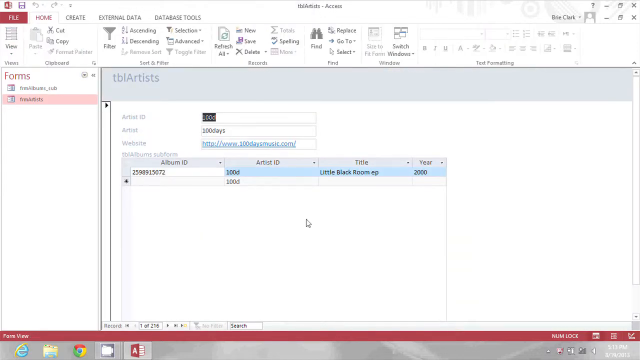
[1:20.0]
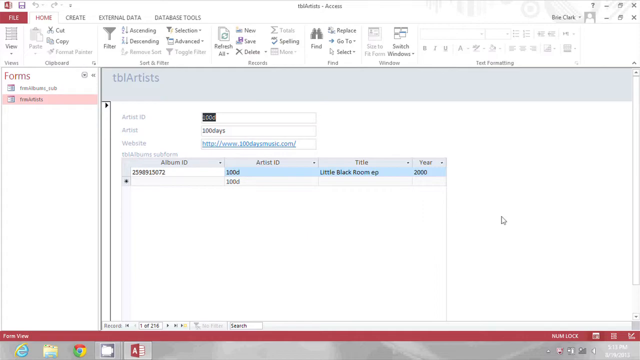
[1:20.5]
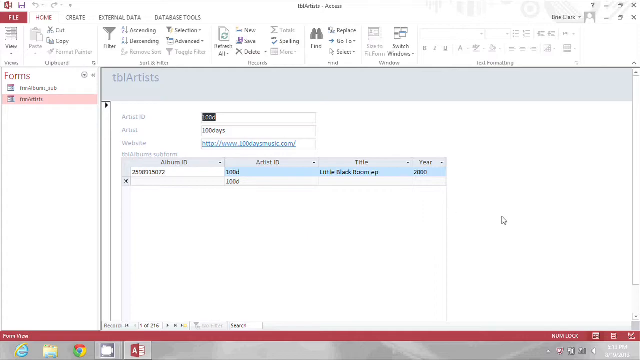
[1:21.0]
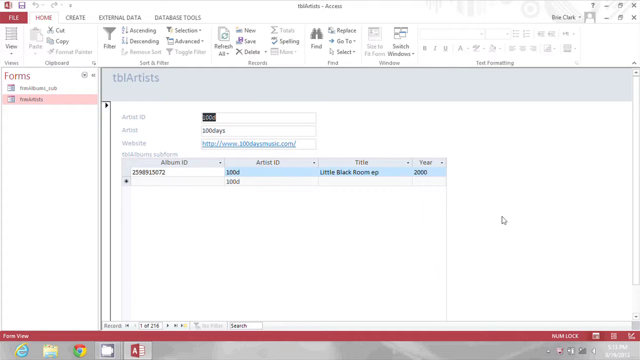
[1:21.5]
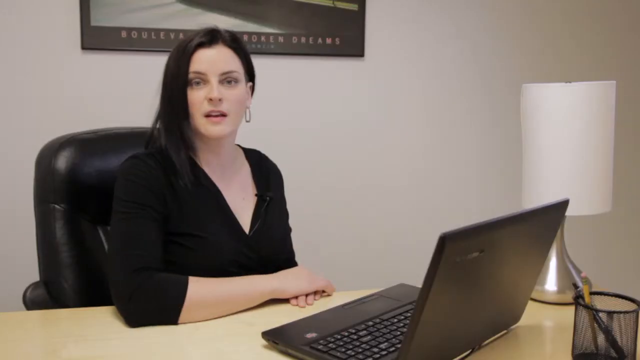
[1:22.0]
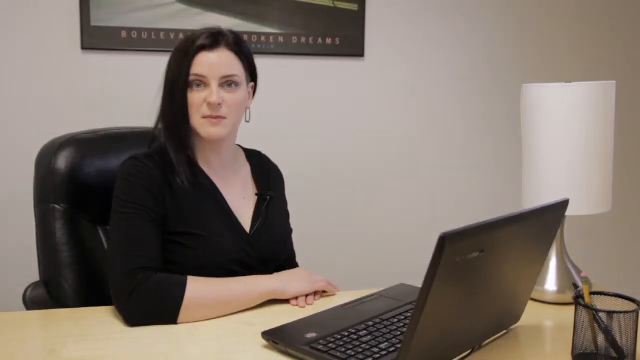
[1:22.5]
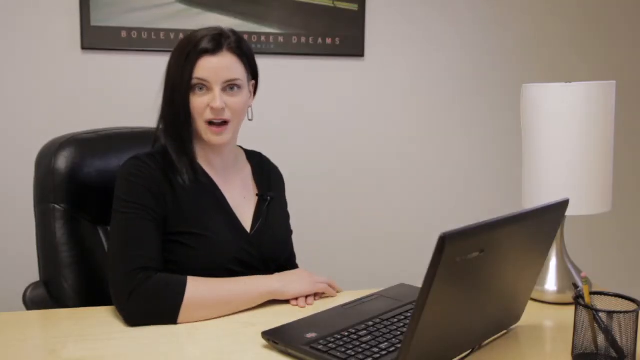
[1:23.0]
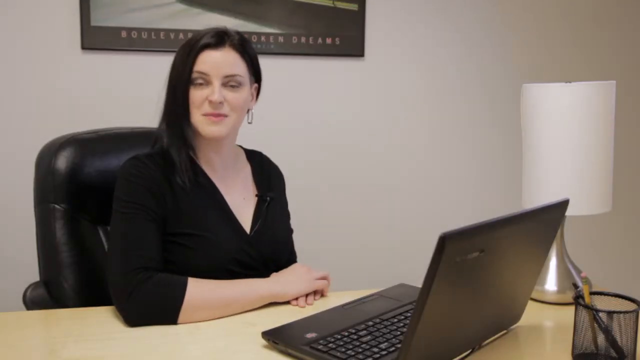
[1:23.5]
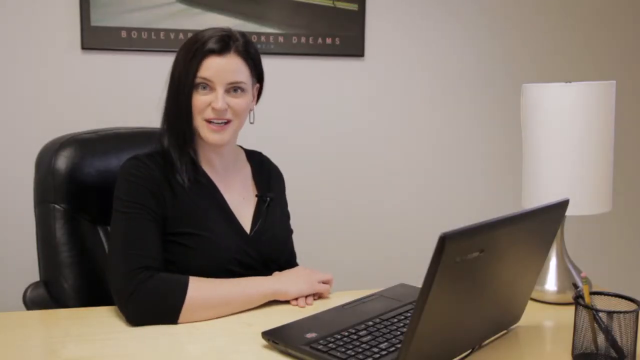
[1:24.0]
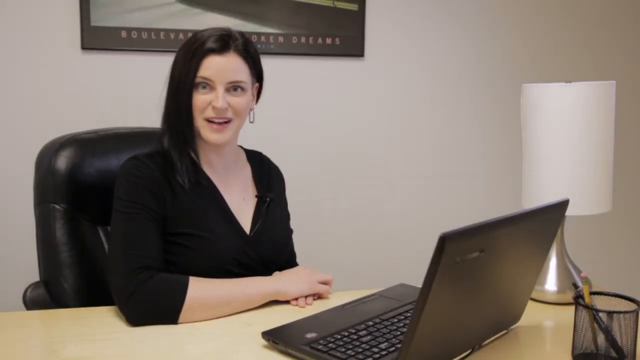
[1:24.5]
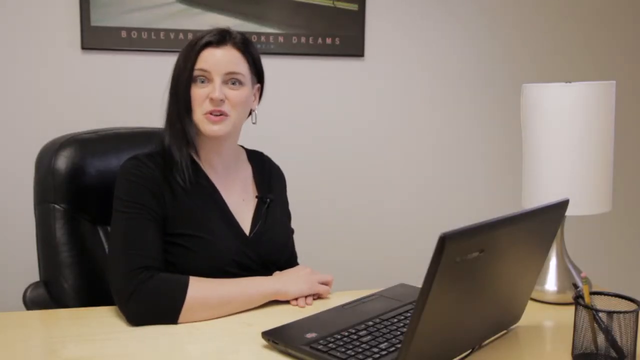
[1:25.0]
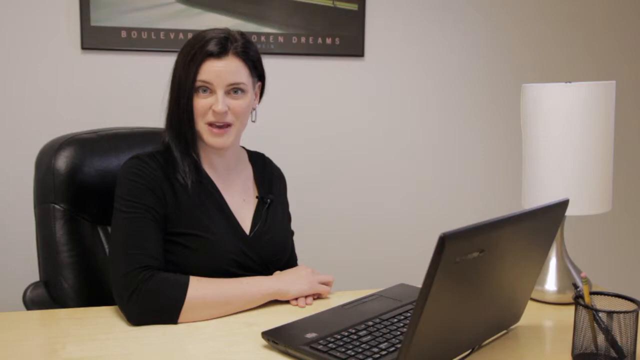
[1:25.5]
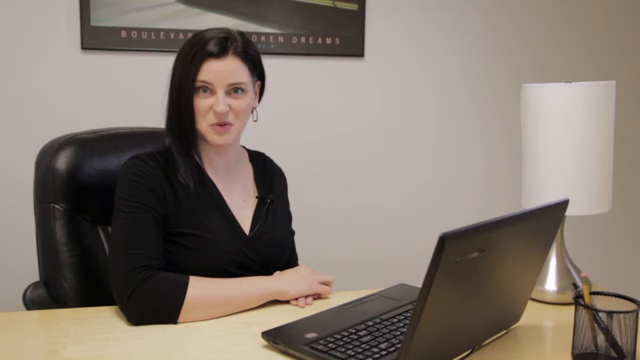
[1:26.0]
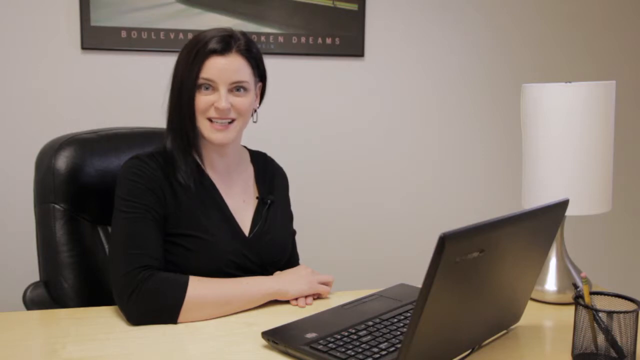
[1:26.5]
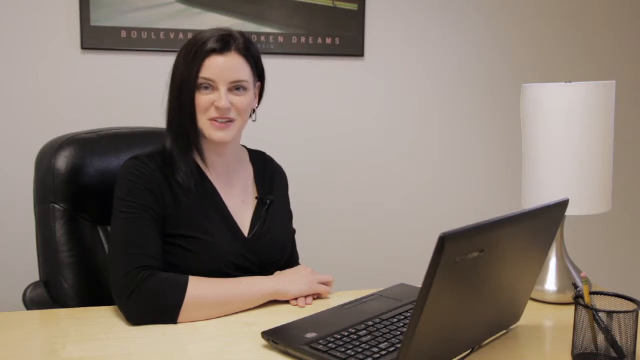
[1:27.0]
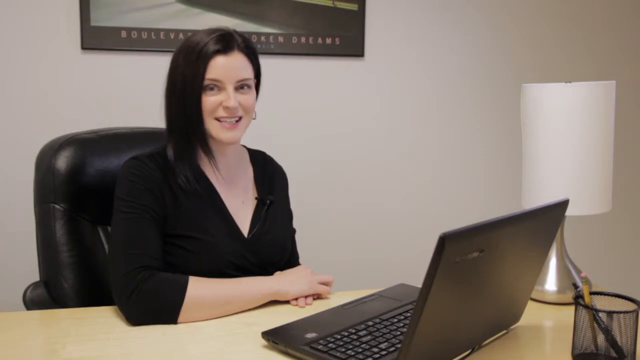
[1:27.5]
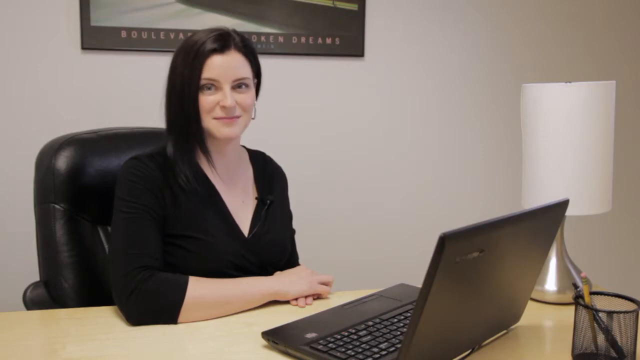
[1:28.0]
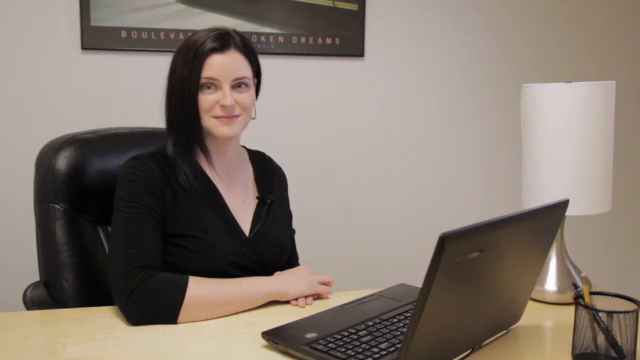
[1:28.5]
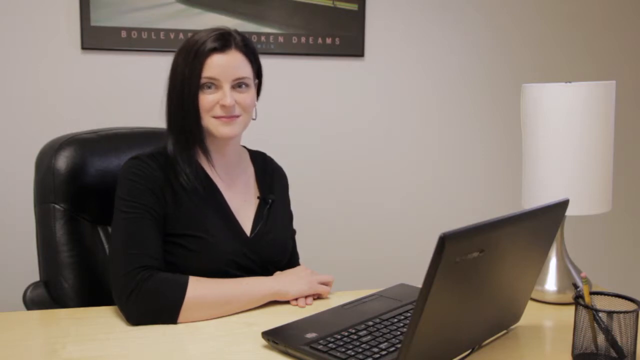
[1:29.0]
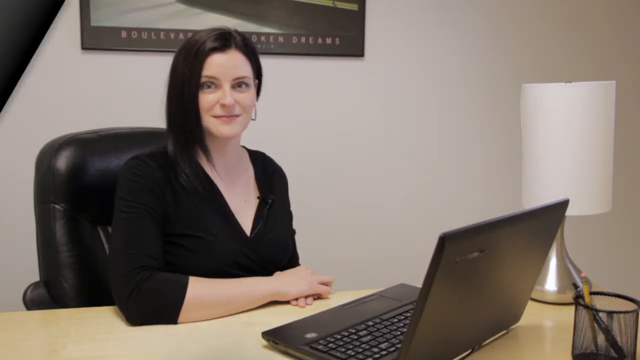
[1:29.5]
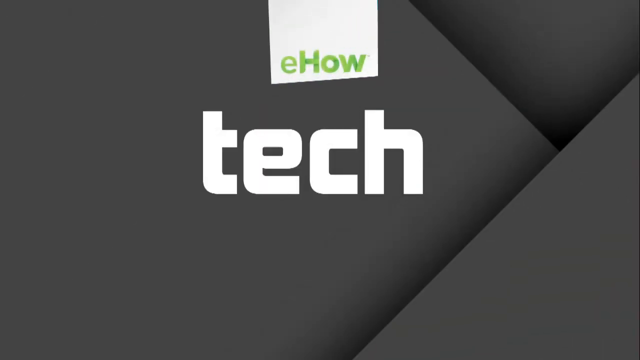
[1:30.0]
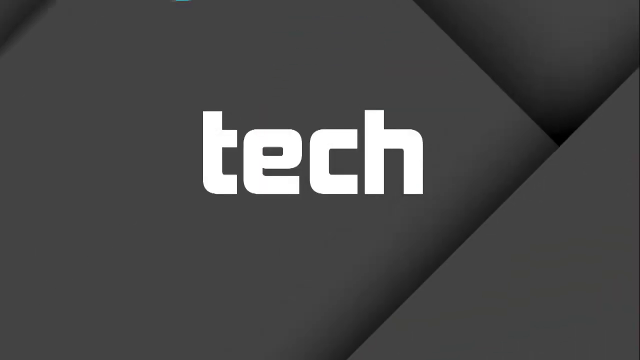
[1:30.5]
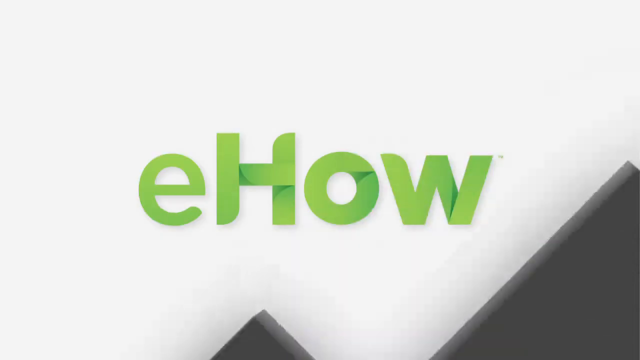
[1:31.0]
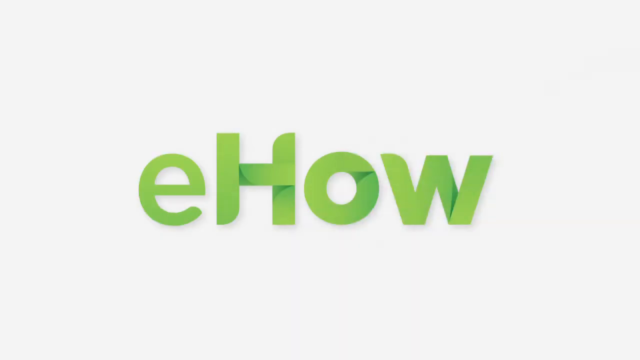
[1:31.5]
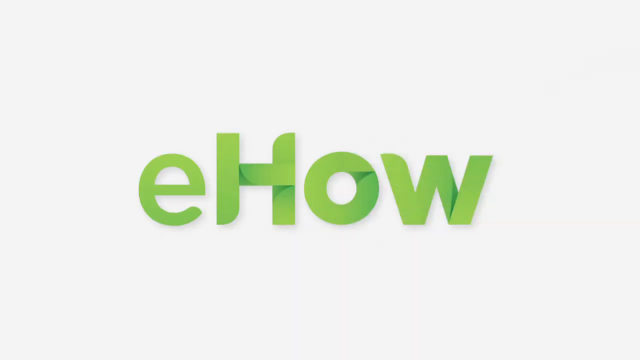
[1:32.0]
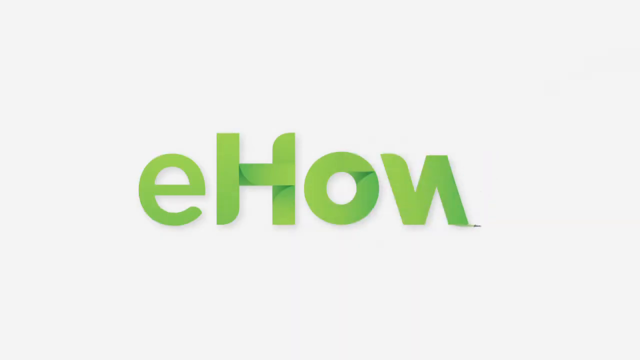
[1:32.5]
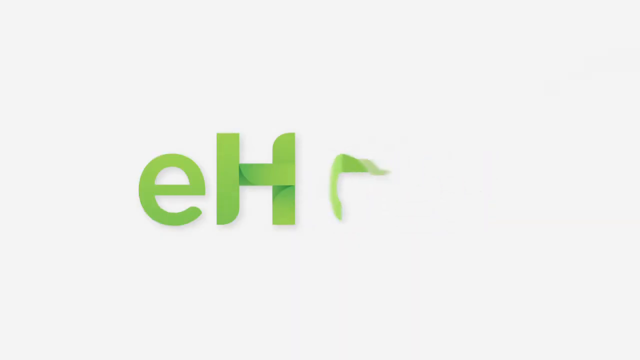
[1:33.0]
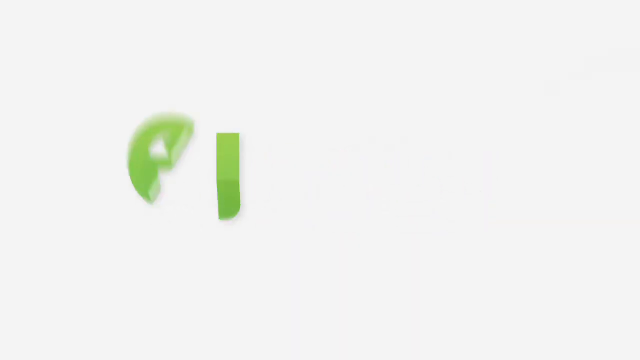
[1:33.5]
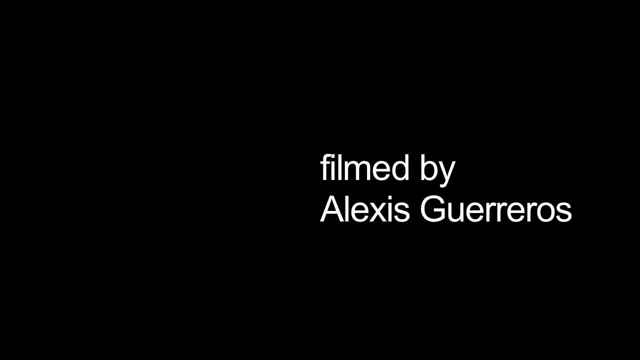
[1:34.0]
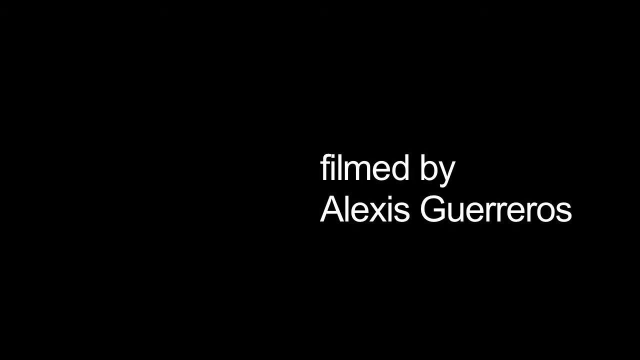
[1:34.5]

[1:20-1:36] The view flips from the graphs back to Brie. She has black hair and black eyebrows, is very pale, and wears a black three-quarter sleeve shirt. She is sitting in a black chair, with a black computer and a black pen or pencil case. Behind her is a picture, black on the bottom, that says "Boulevard of Broken Dreams", with the text looking pink. There is a silver lamp whose lampshade is white on top; it is a fairly long lampshade. Brie has an earring in her left ear; her right ear cannot be seen because it is covered by her hair. One side of her hair is pulled back on the left, and the other side is left down on the right. She has a sleek look, is fairly attractive, and is very well dressed, in a very neat, office-type area.